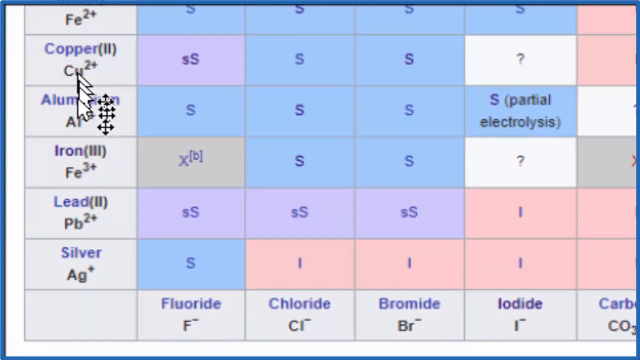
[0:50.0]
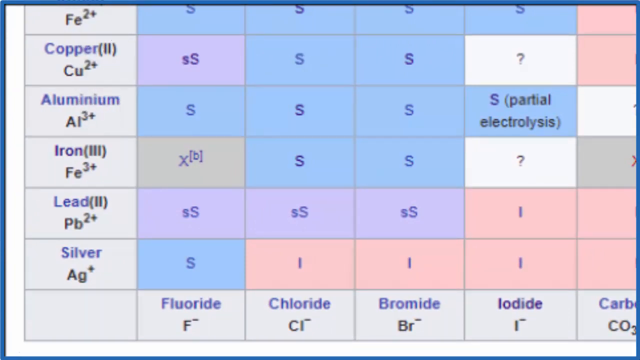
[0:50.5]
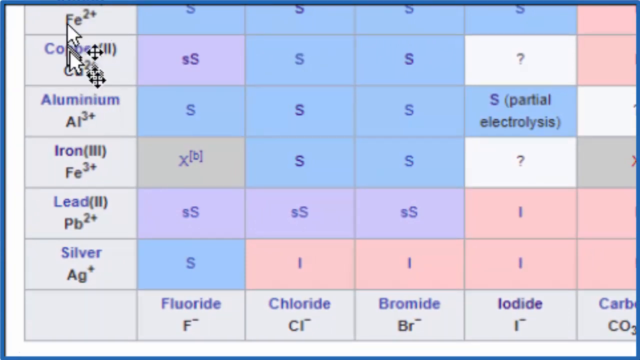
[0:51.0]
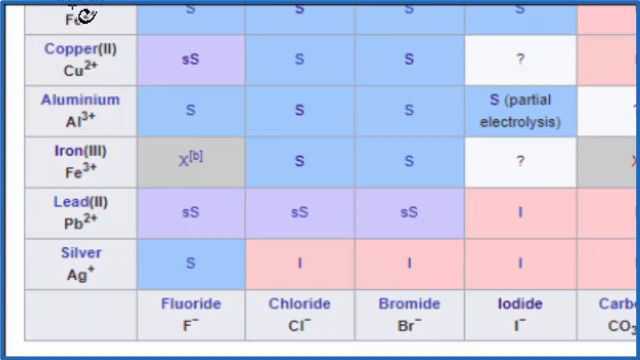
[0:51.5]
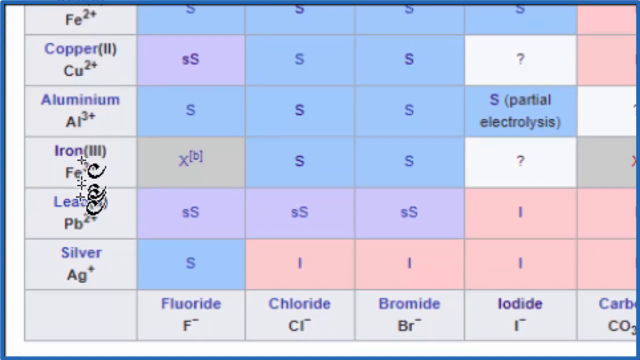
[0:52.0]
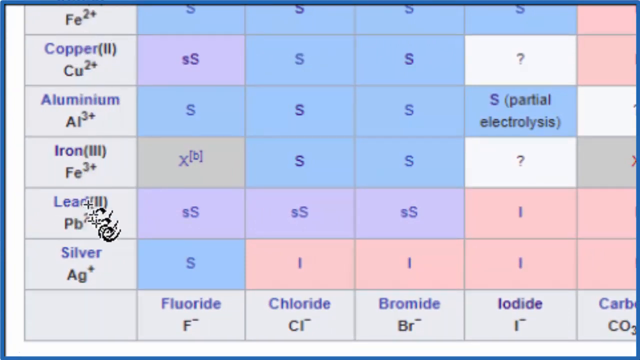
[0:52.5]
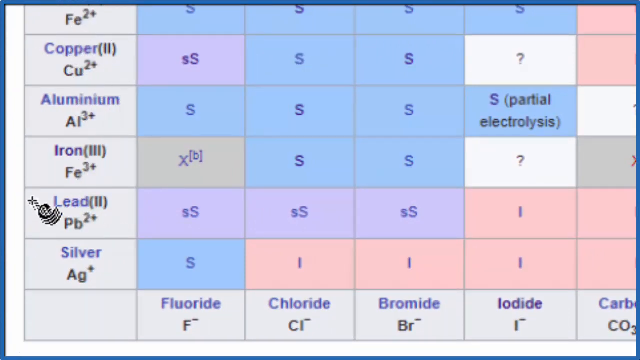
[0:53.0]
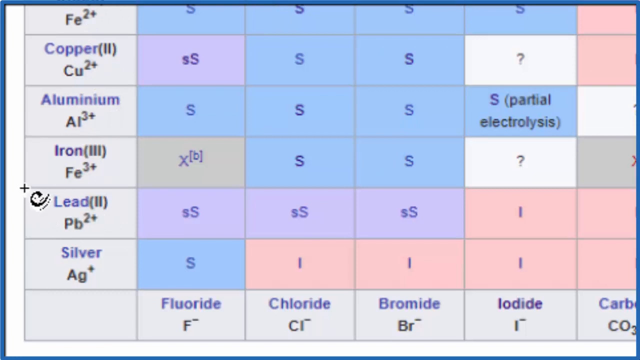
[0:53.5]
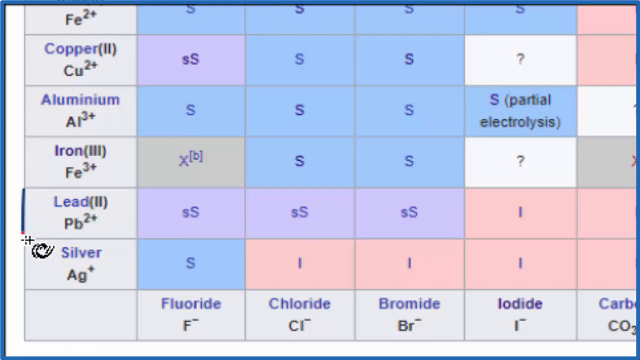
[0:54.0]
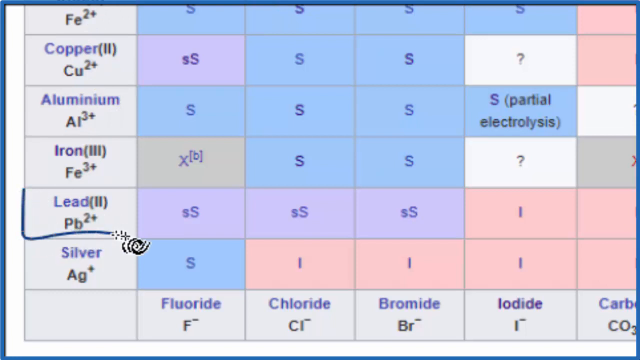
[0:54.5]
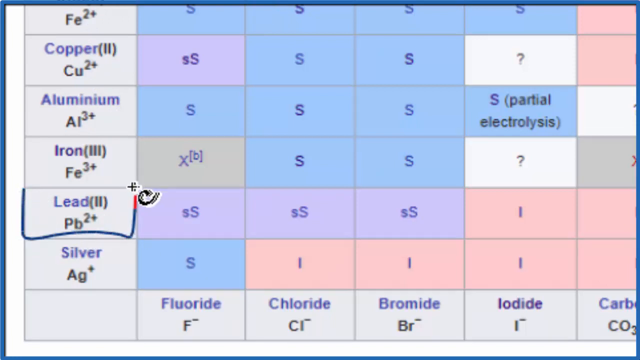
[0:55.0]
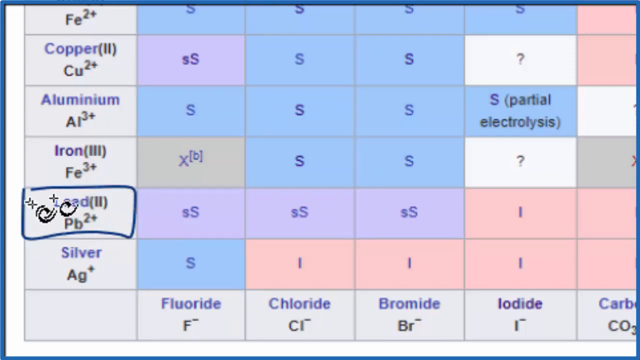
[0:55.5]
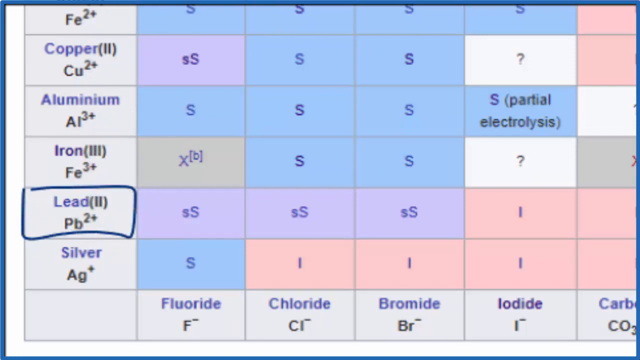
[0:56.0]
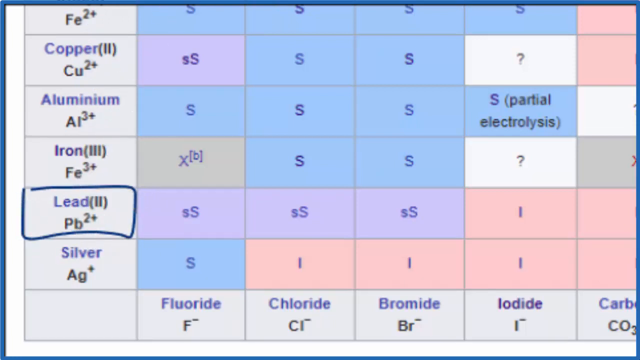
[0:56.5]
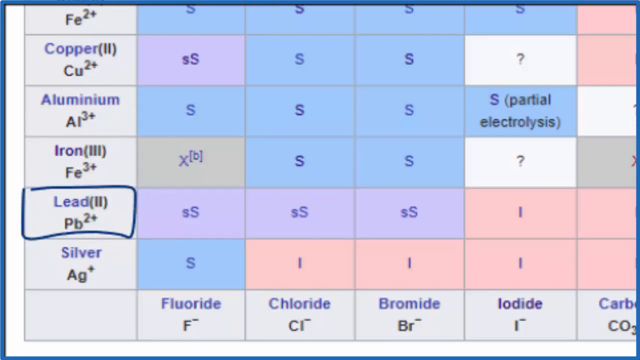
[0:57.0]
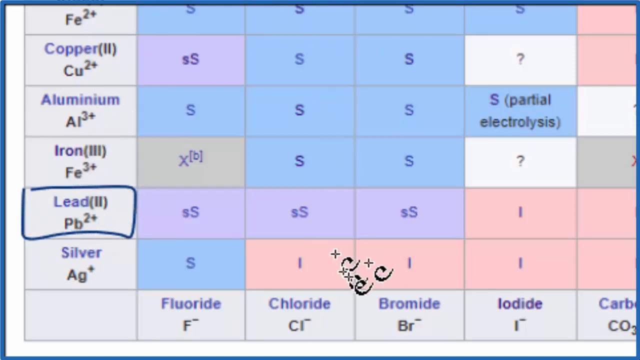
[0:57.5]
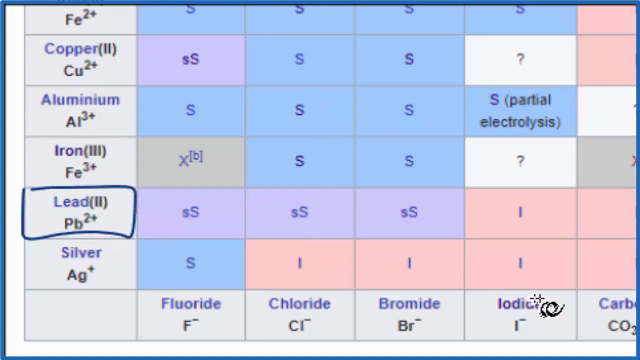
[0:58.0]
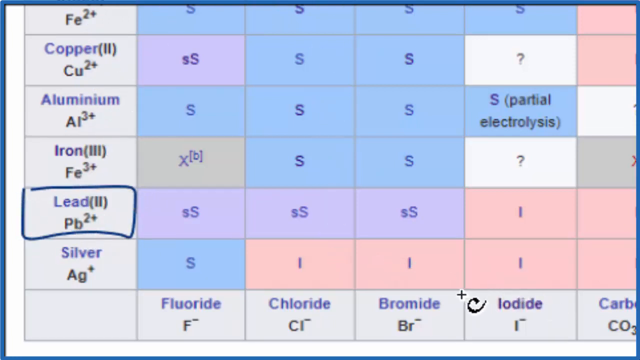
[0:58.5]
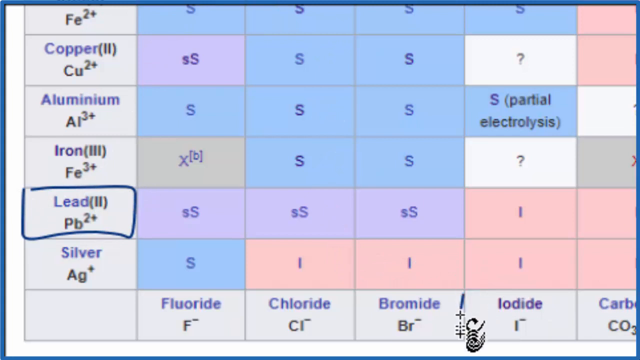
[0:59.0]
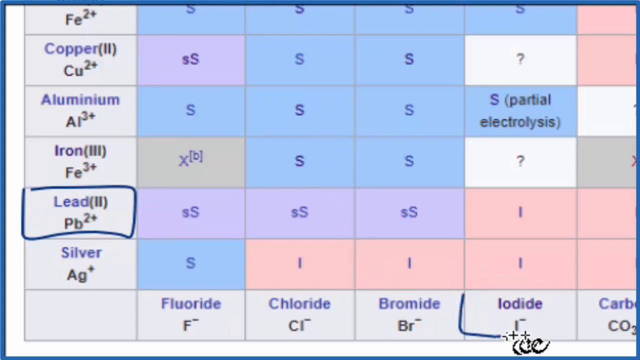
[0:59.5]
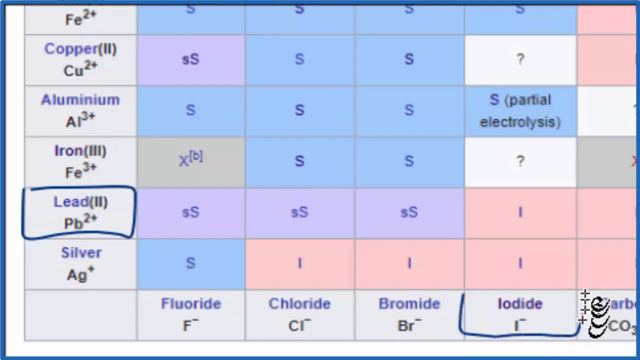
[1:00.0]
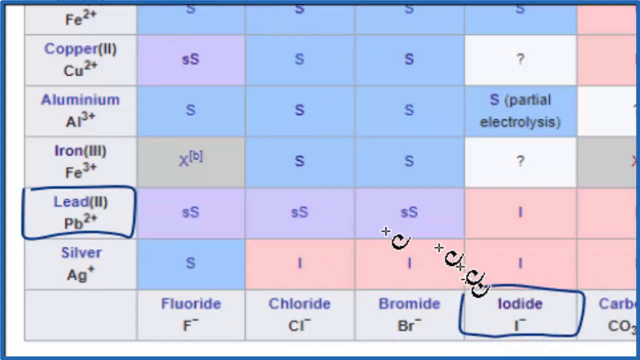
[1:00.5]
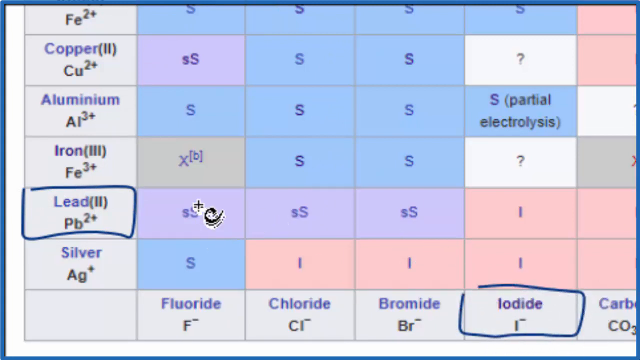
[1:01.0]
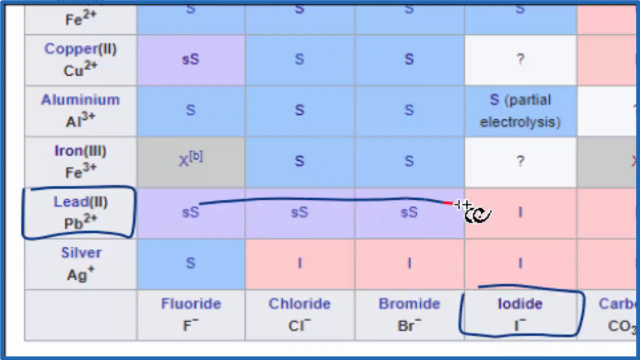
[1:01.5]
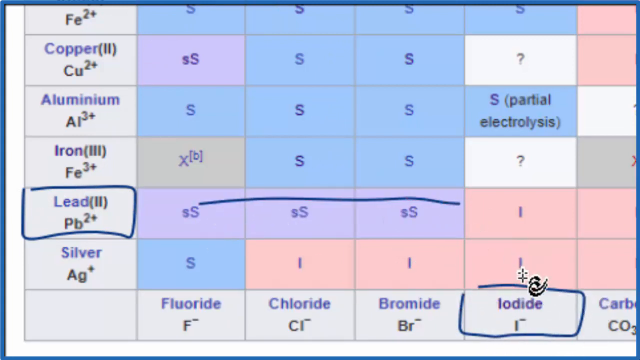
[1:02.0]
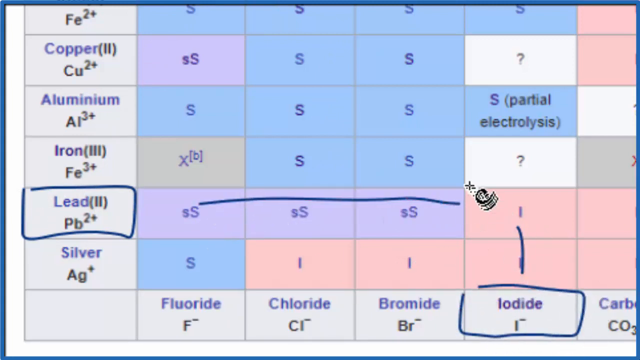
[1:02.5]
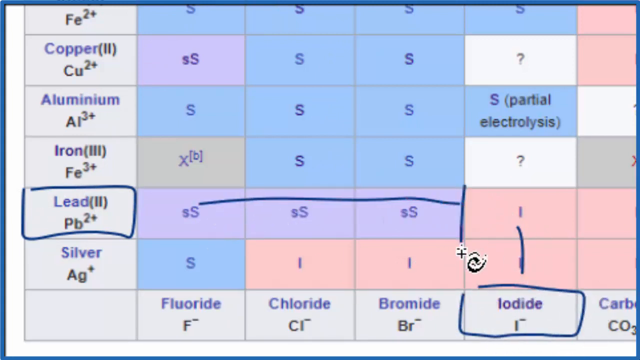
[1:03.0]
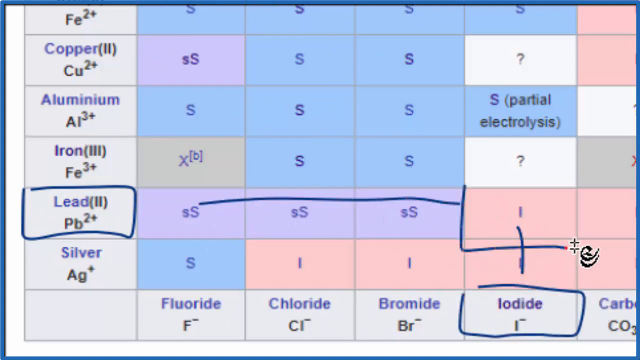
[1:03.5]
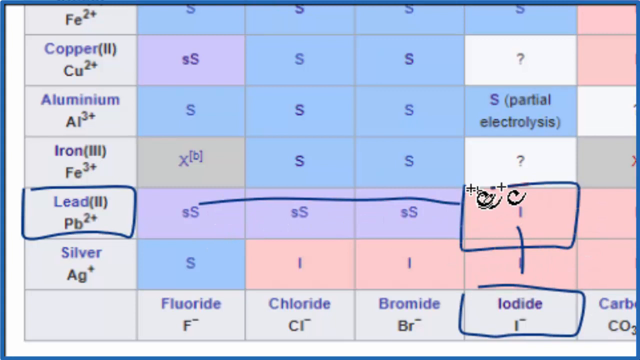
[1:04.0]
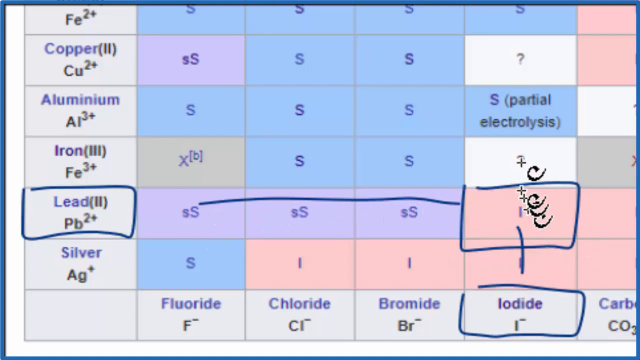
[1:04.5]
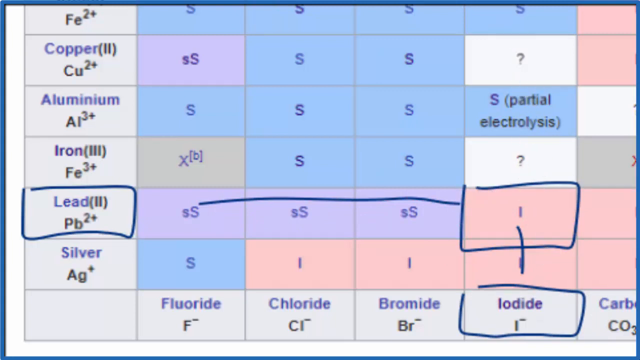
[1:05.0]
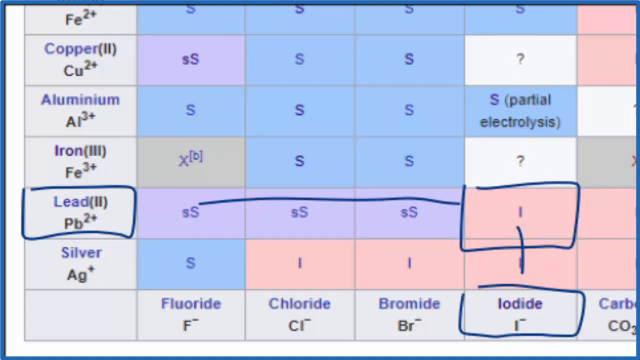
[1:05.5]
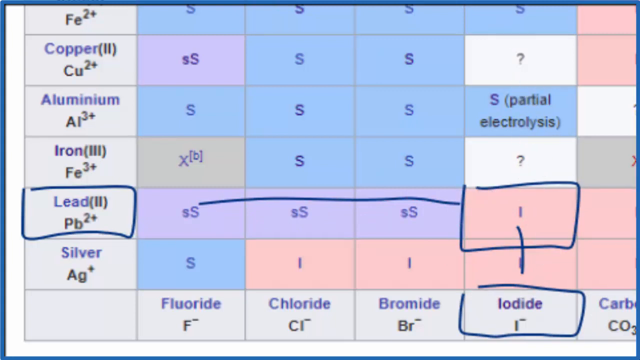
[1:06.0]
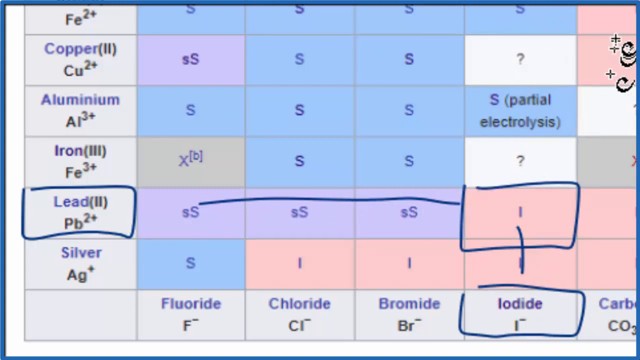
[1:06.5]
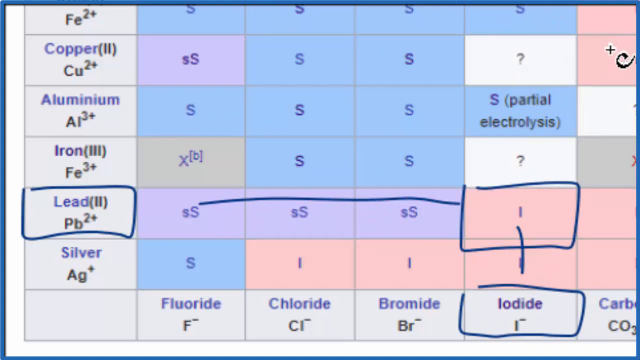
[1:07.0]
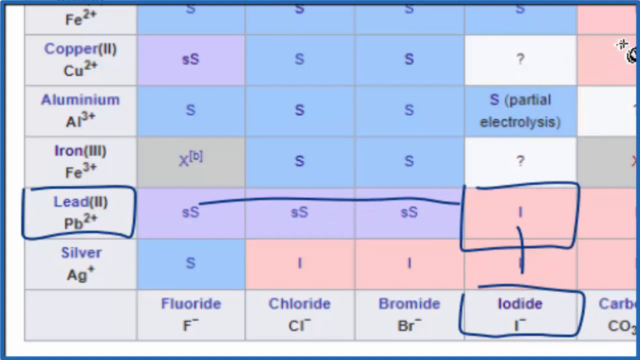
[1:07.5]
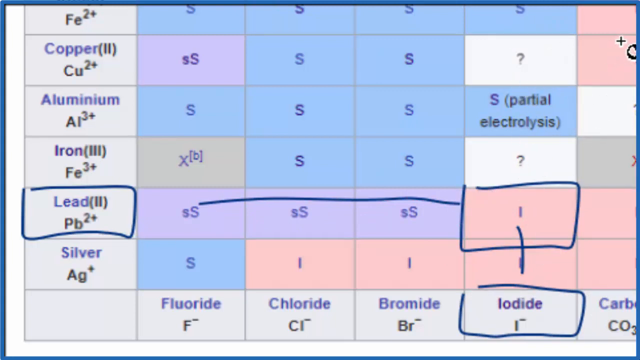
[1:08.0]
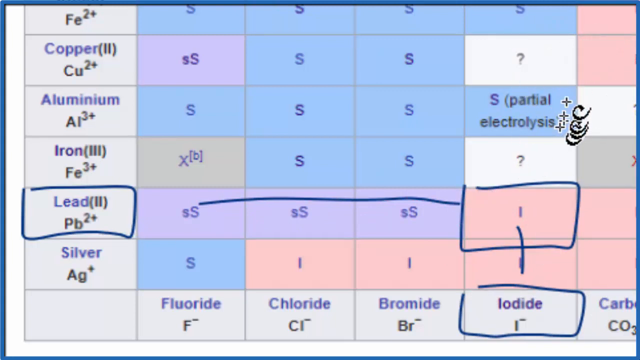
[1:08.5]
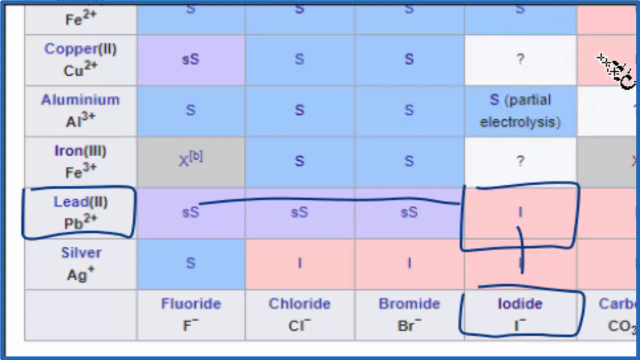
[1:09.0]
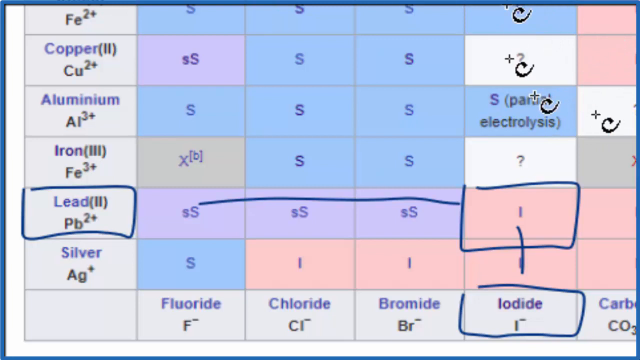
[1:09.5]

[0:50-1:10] A table with many rectangles is shown. Rectangles on the left side read "Fe2+" or "iron 2+", "copper 2", "aluminum Al2+", "iron 3 Fe3+", "lead 2 Pb2+" and "silver Ag+". The bottom row reads "fluoride F-", "chloride Cl-", "bromide Br-", "iodide I-" and "carbonate". Inside the table the rectangles are colored: blue rectangles contain an S, purple rectangles contain "sS" (a small s followed by a capital S), and pink rectangles contain an I. The mouse cursor starts at the top left, moves over the "lead 2 Pb2+" rectangle and draws a blue rectangle around it. It goes up and down again, then to the bottom right where the "iodide I-" rectangle is, and draws another blue rectangle around that. It then draws a horizontal line from the lead rectangle from left to right, and a line upward from the iodide rectangle. Where the two lines intersect, it highlights a pink rectangle with an I in the middle. The cursor then moves back up and toward the top right, making some motions.